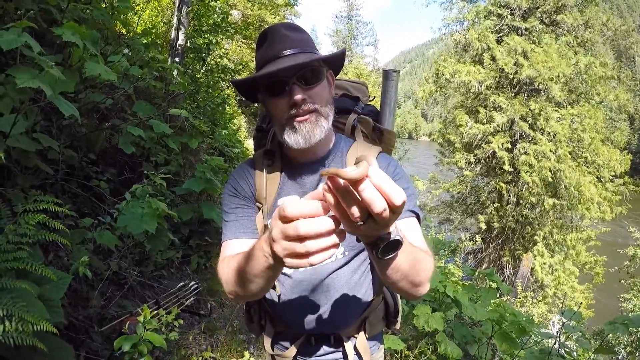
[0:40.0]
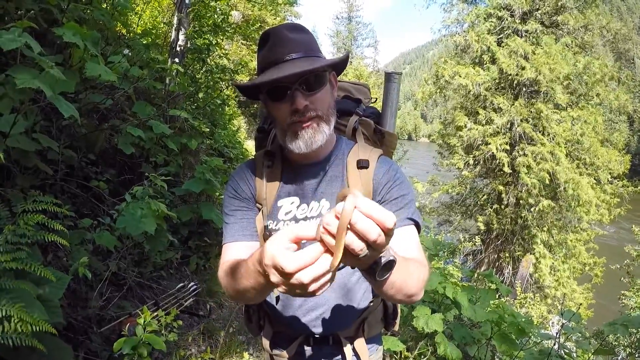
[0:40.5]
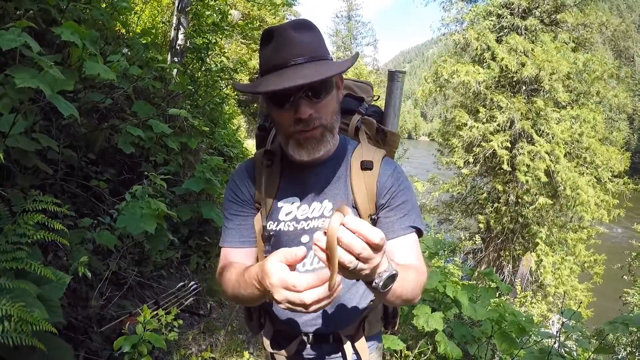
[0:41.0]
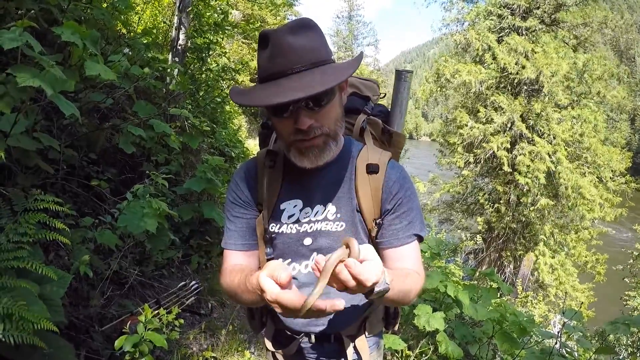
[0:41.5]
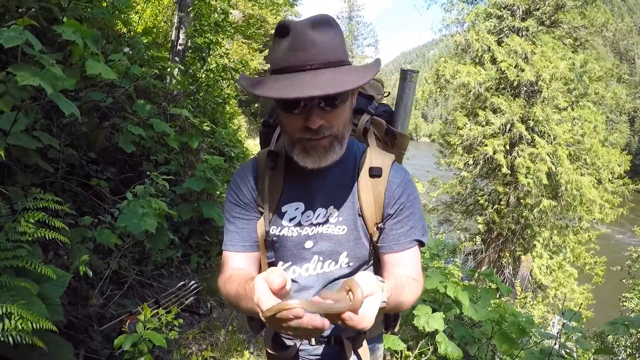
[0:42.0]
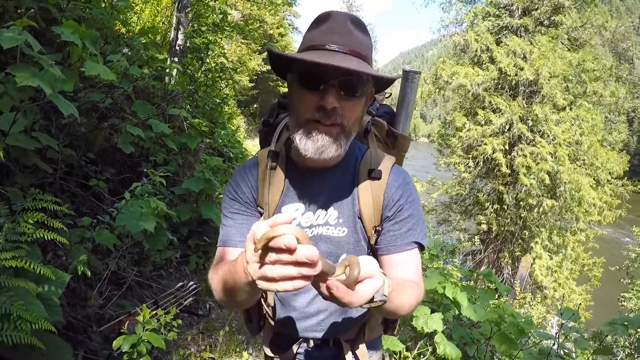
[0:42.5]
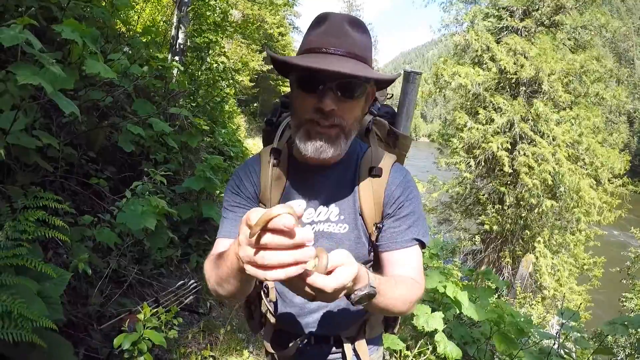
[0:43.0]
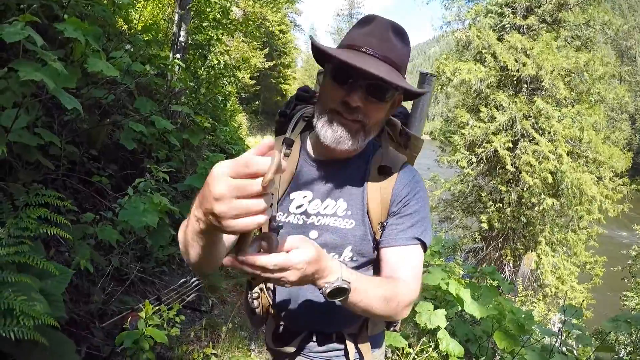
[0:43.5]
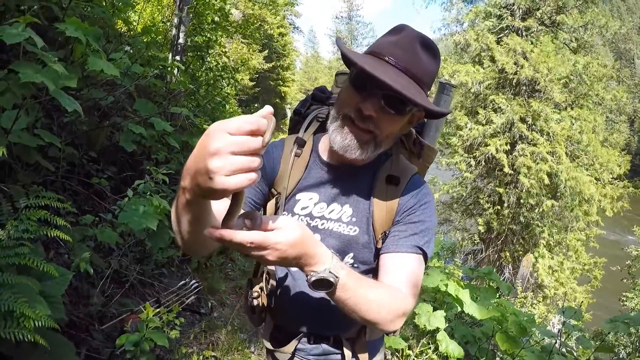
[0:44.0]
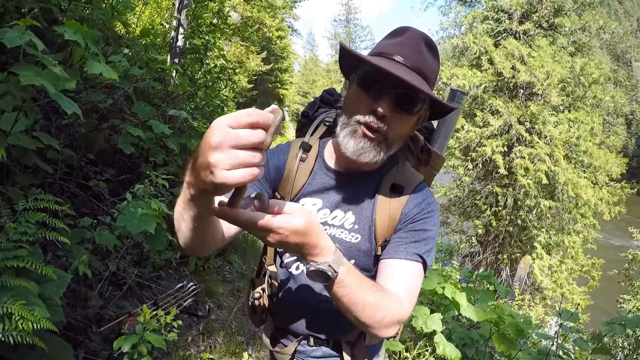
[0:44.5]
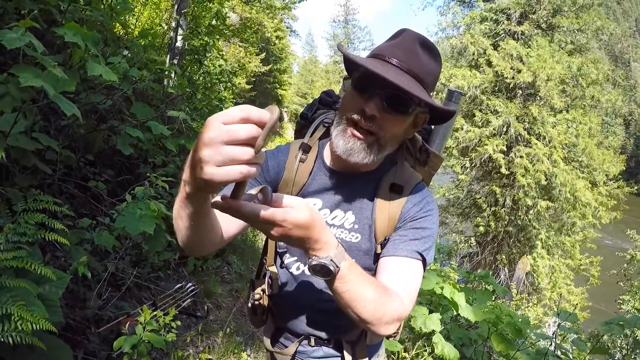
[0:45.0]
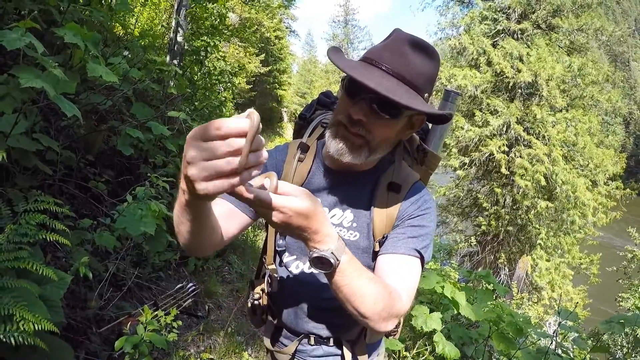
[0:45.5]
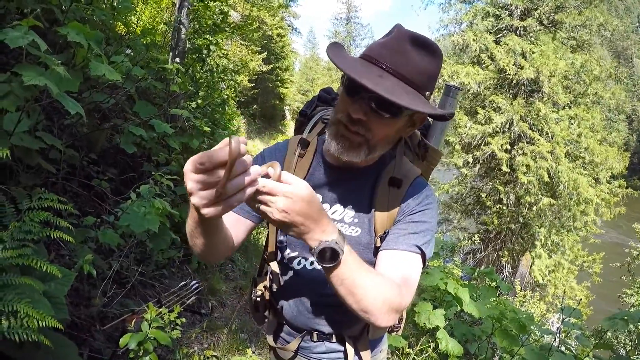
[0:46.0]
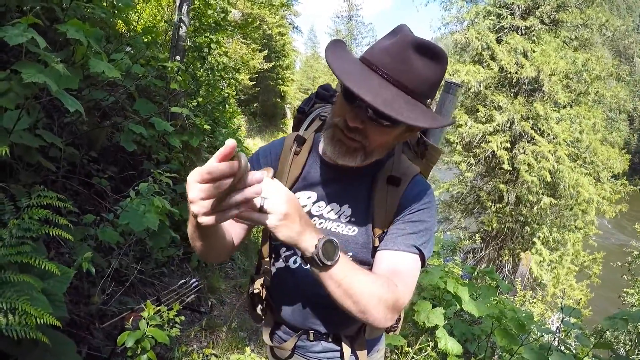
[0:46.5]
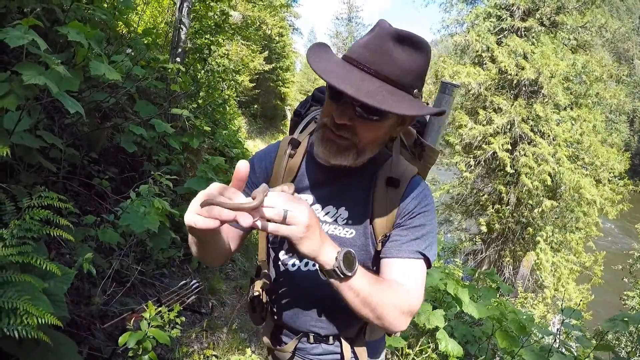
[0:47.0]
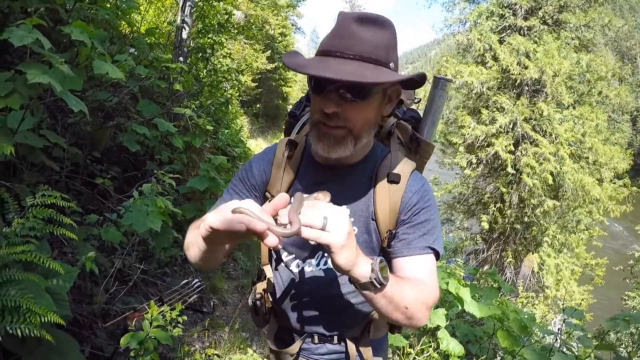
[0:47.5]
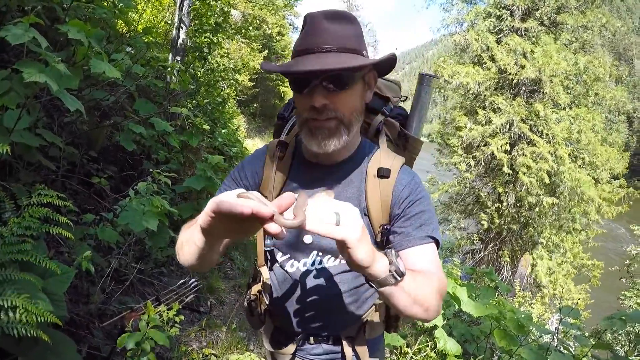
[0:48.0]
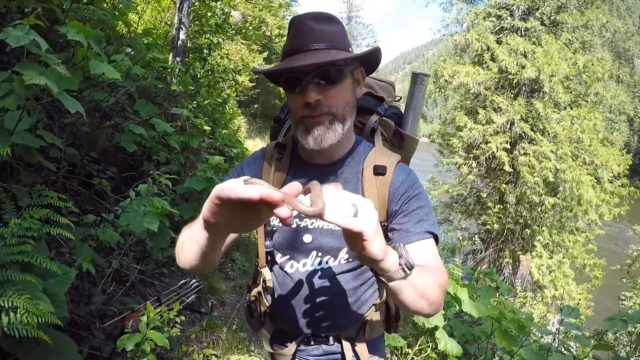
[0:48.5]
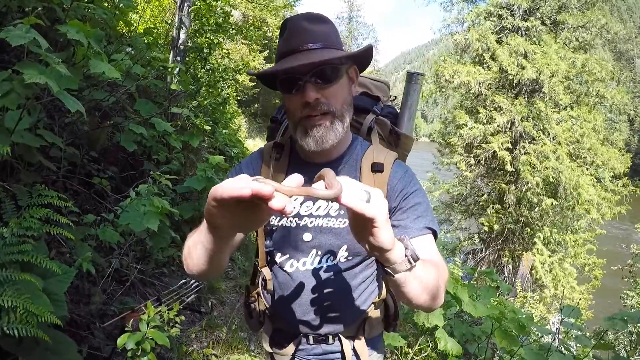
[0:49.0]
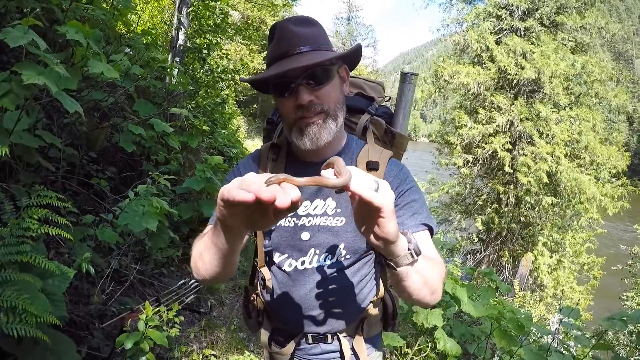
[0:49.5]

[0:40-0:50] A man wears a cowboy hat or fedora, sunglasses, a full gray beard and a full gray mustache. He has a full hiking backpack with what looks like a round tube or a map sticking out of it; its shoulder straps are tan, and the backpack appears fairly heavy. He wears a gray shirt and a large watch on his left arm. In his left hand he holds a small snake, maybe 18 to 24 inches long. His right hand is up, and every now and then he uses his index finger or another finger to lift a section of the snake, showing how calm and docile it is. The snake is light brown, and its head is almost worm-shaped, with the same dimensions as its body.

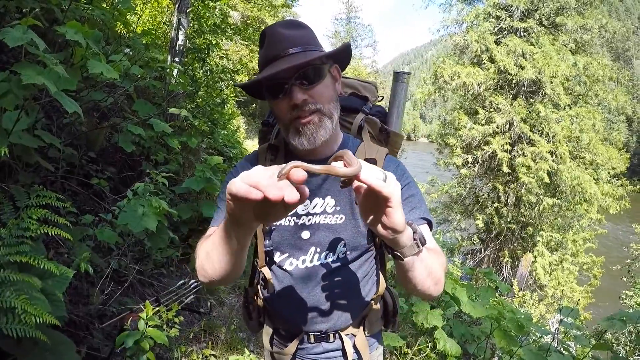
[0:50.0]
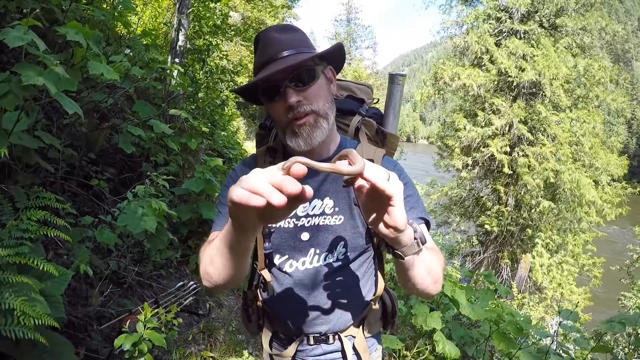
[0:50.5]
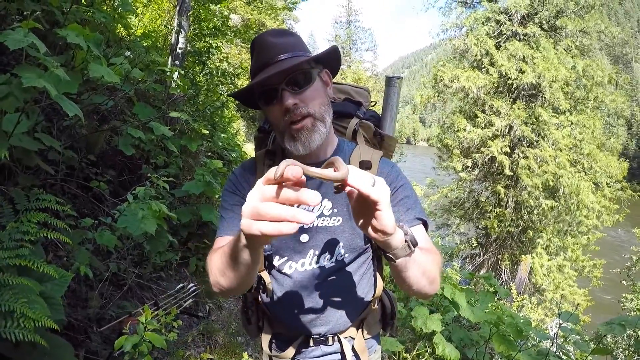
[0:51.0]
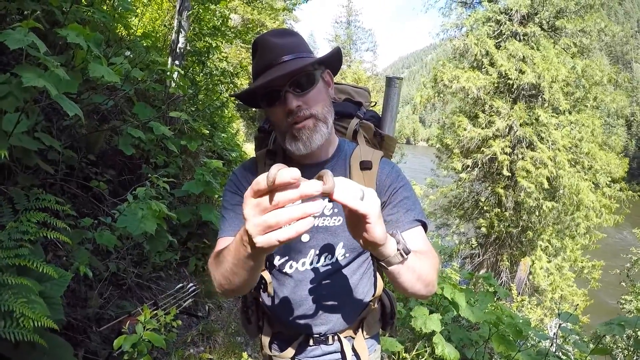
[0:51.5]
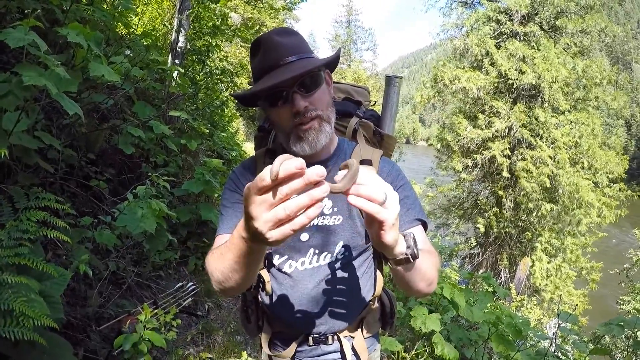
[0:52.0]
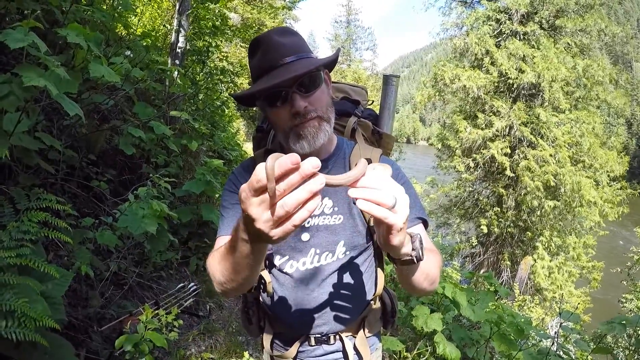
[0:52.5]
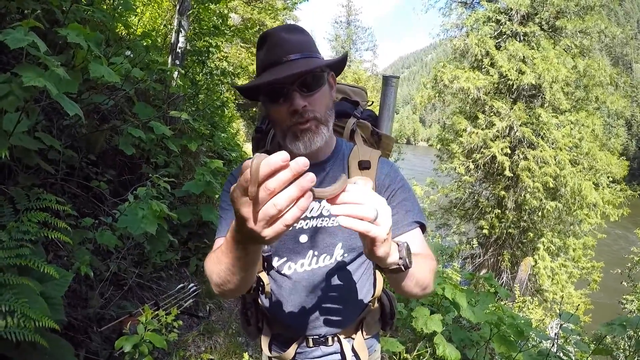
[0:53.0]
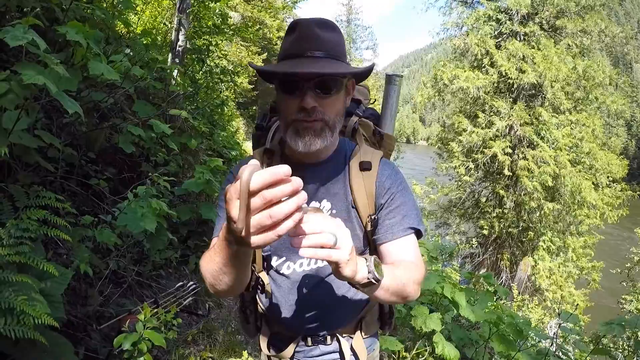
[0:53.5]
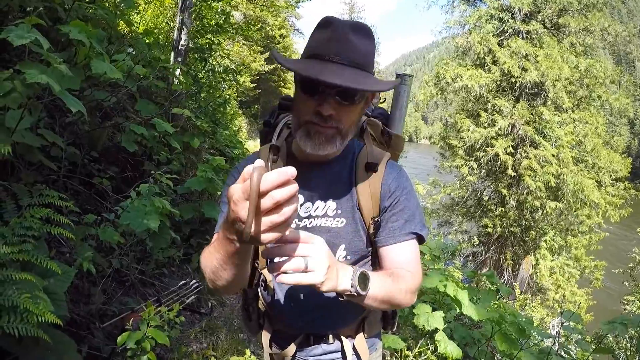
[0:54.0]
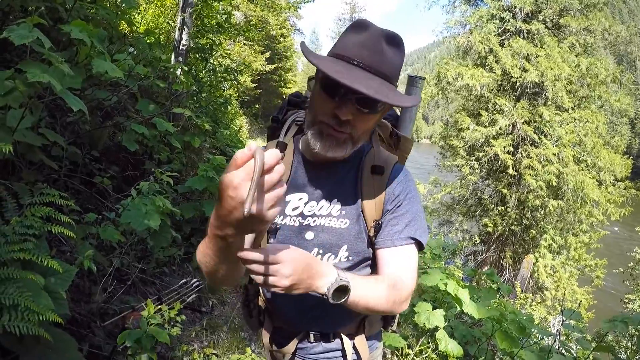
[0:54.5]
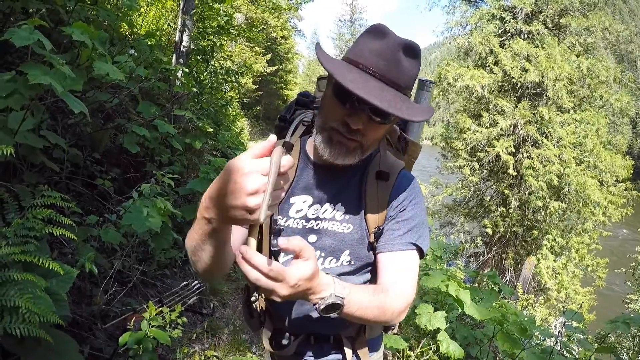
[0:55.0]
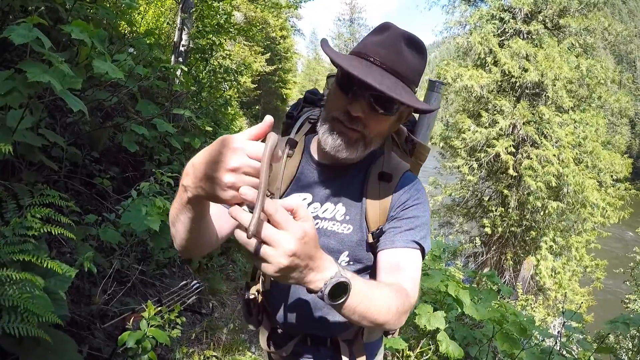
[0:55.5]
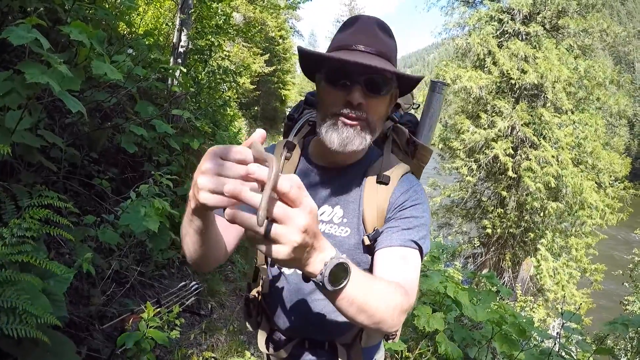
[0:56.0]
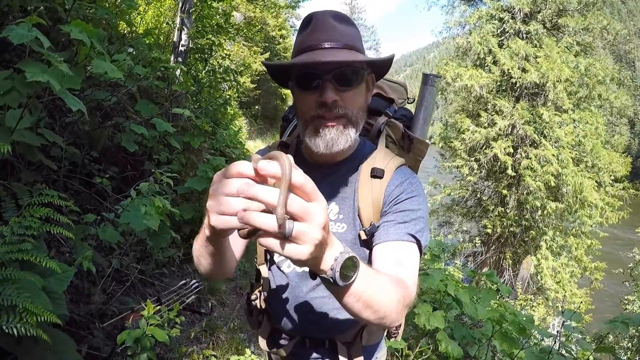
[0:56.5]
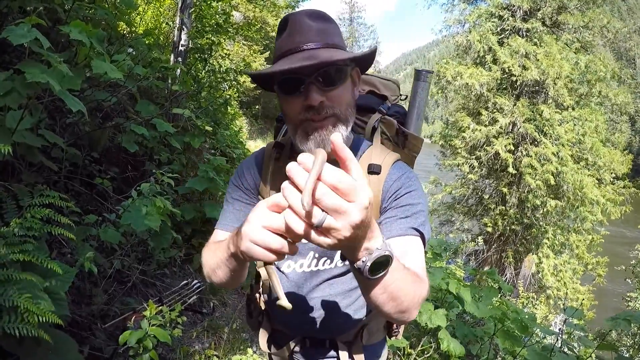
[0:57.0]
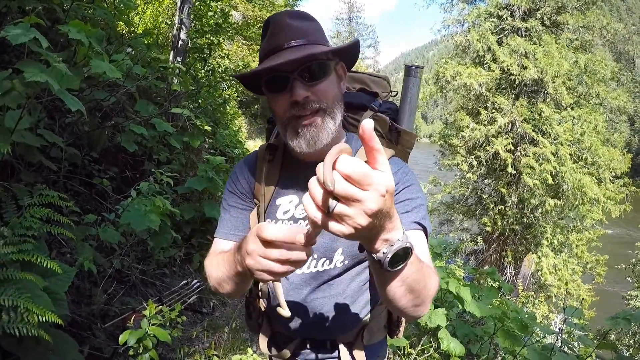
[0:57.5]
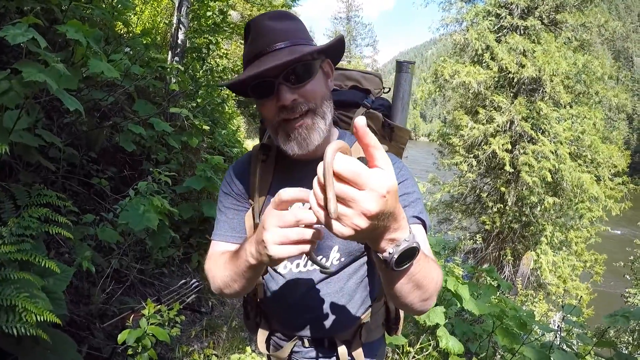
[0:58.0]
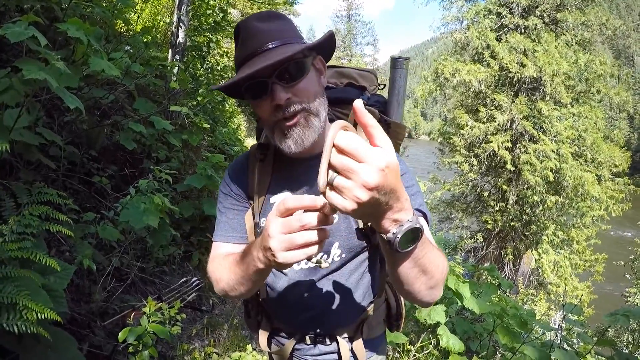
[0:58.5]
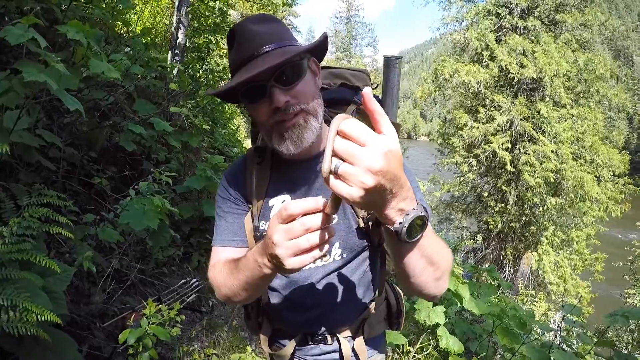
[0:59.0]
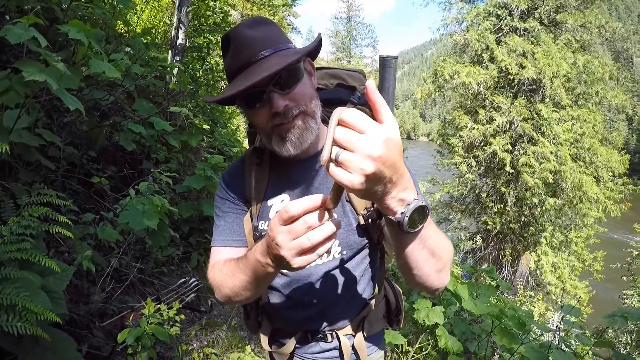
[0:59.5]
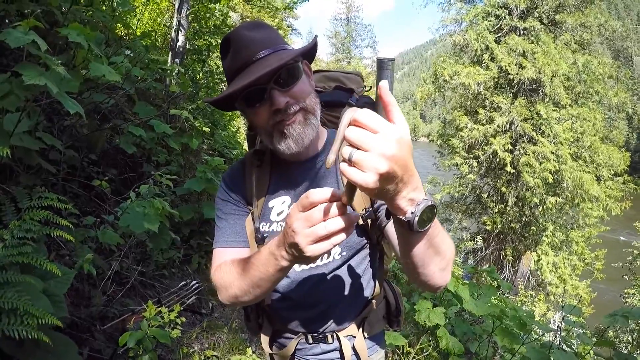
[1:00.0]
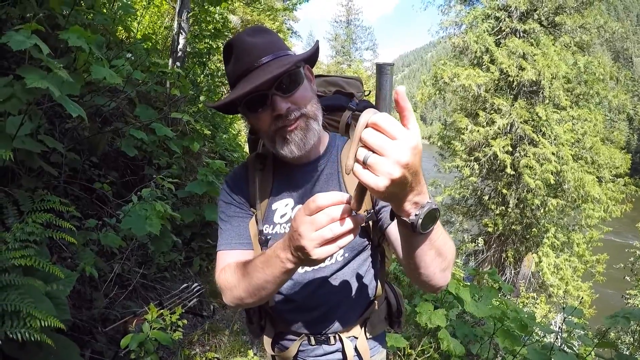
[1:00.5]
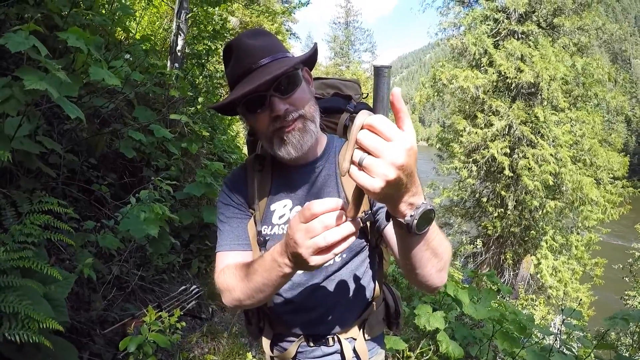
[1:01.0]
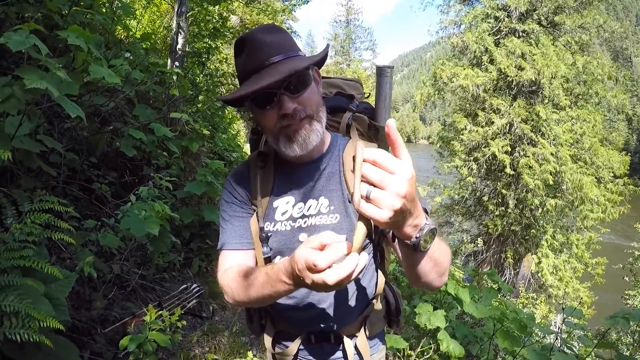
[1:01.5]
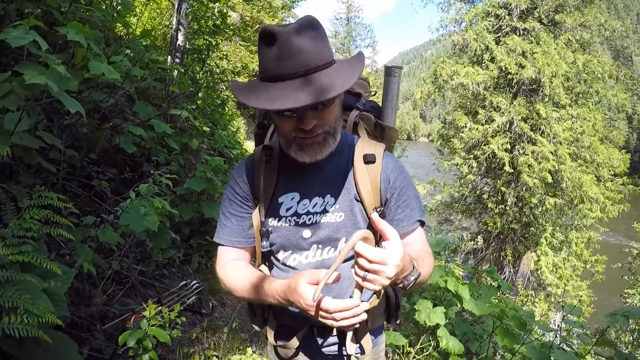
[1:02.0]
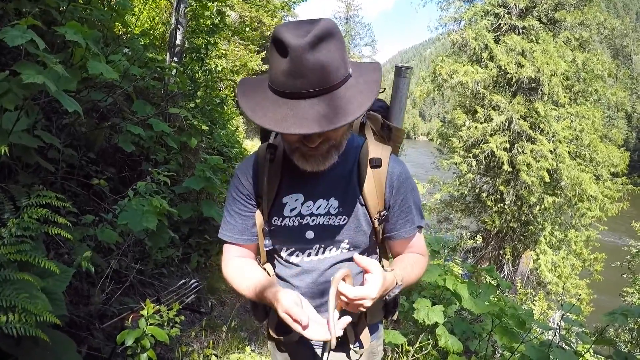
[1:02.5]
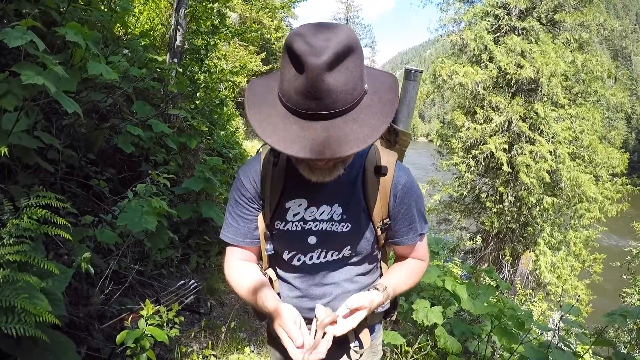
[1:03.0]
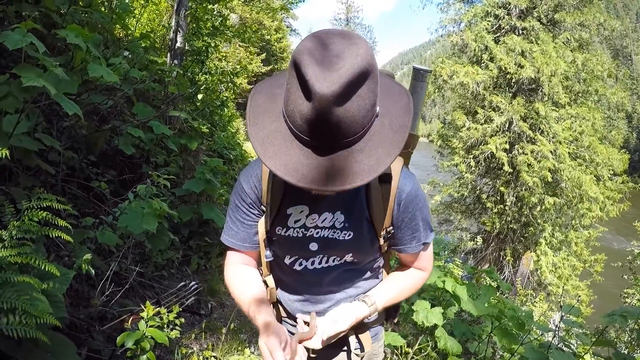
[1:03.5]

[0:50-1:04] A man is out in the woods, wearing a fedora with a braided leather band, sunglasses, and a fairly large hiking backpack with a round tube sticking out over his left shoulder. He holds his right hand up in front of him with a small snake, about 18 to 24 inches long, draped over it, while his left hand is up and turned in at a 90-degree angle, supporting the bottom of the snake. He wears a watch on his left arm and a shirt that says "bear power." He then switches the snake from his right hand to his left, so it is draped across his left hand while his right hand holds its tail, the opposite of how it was held before.